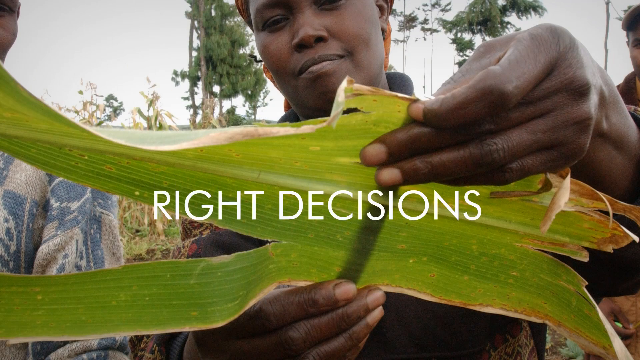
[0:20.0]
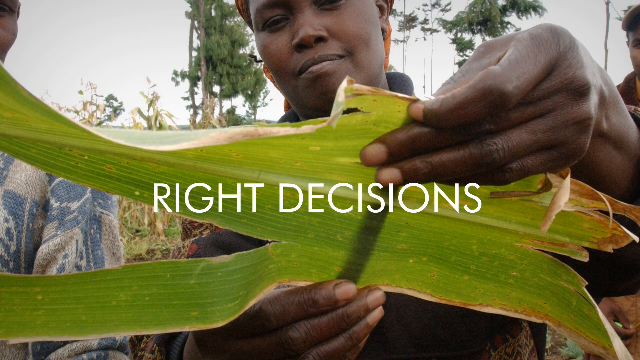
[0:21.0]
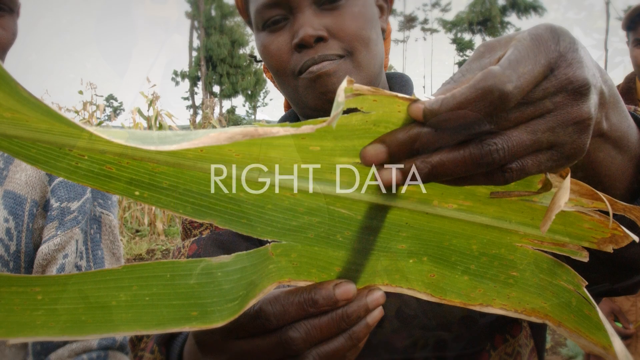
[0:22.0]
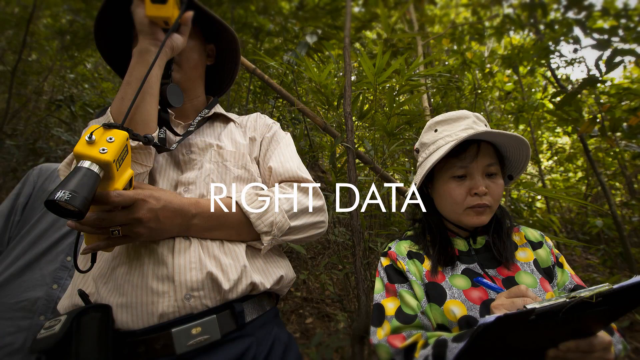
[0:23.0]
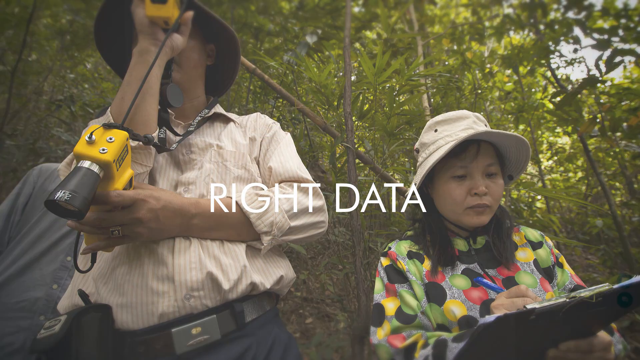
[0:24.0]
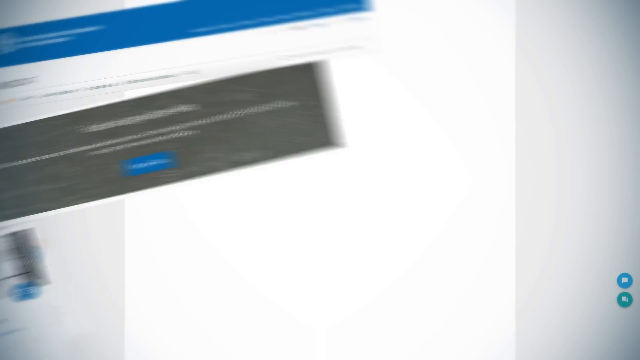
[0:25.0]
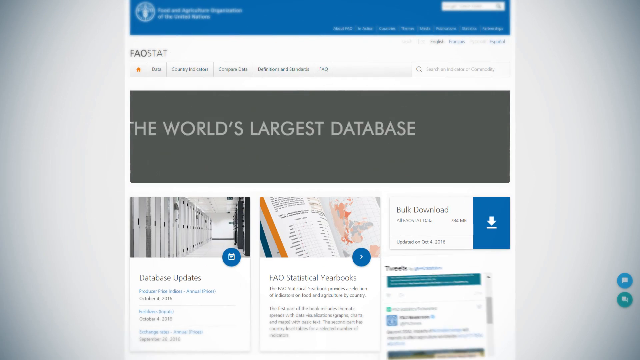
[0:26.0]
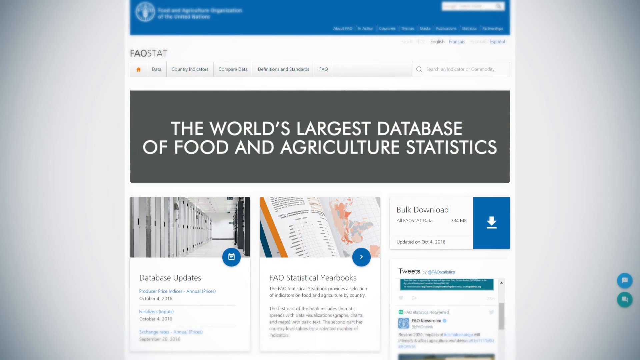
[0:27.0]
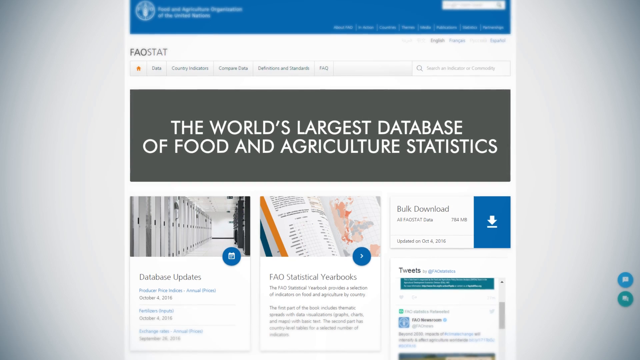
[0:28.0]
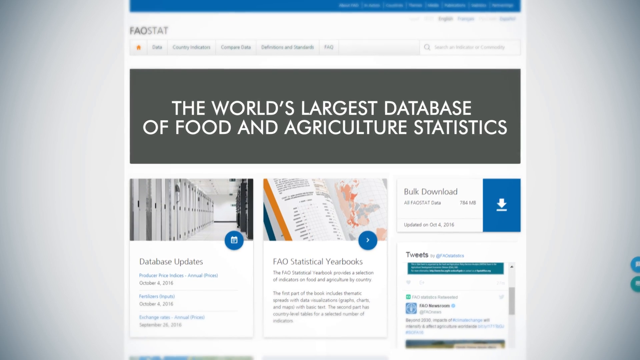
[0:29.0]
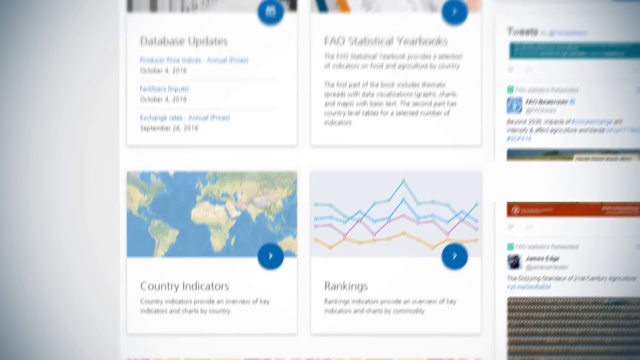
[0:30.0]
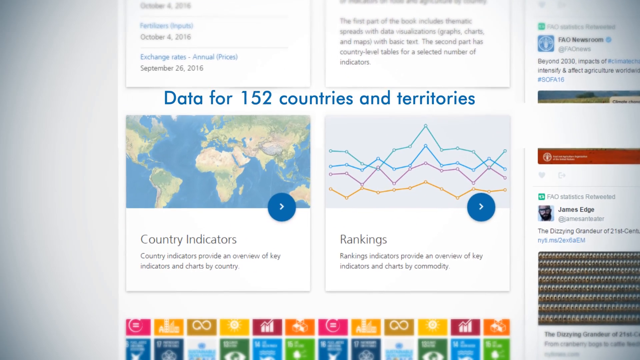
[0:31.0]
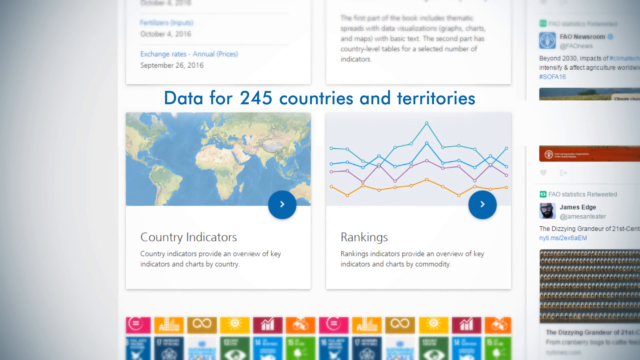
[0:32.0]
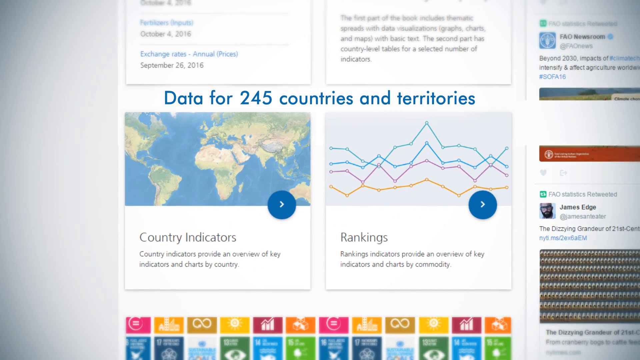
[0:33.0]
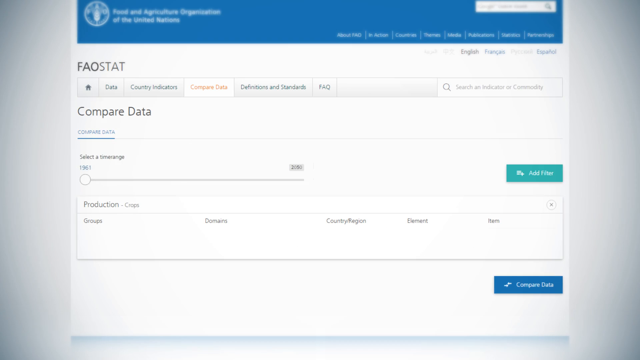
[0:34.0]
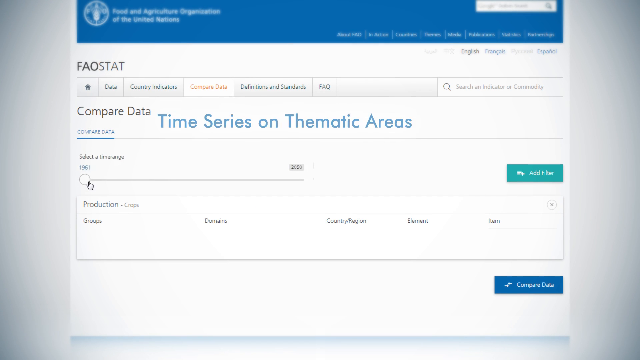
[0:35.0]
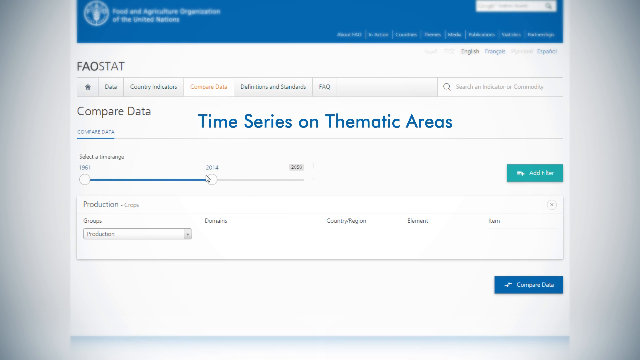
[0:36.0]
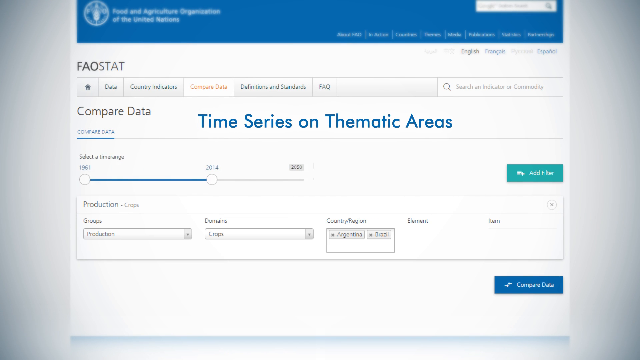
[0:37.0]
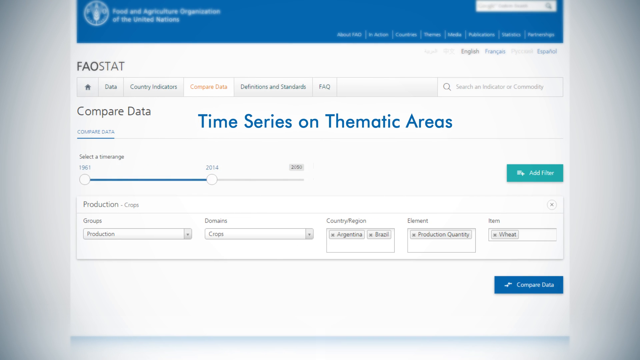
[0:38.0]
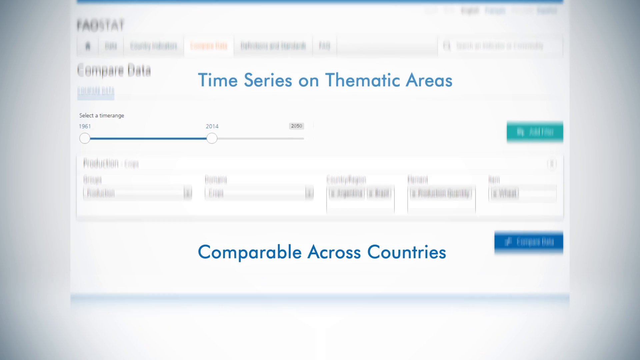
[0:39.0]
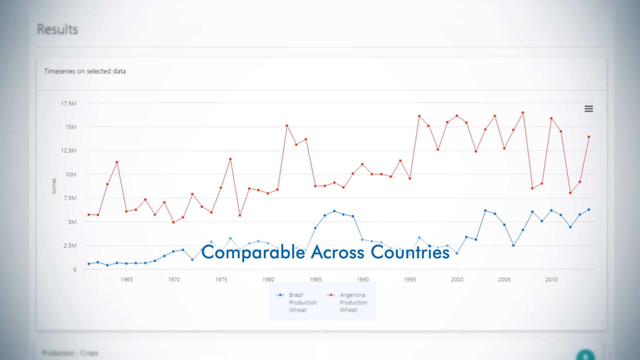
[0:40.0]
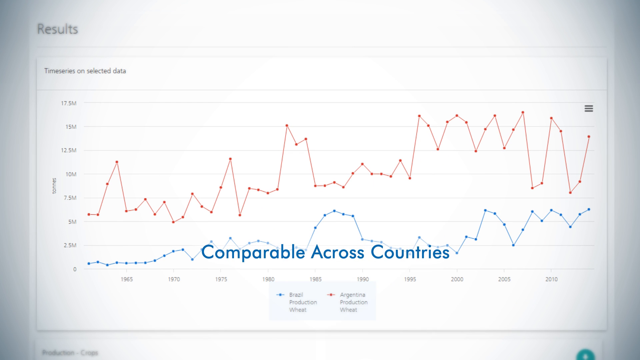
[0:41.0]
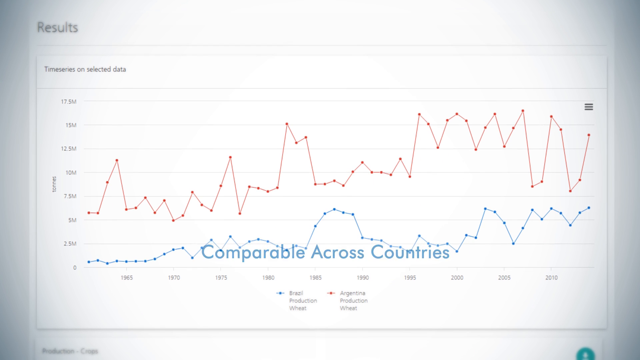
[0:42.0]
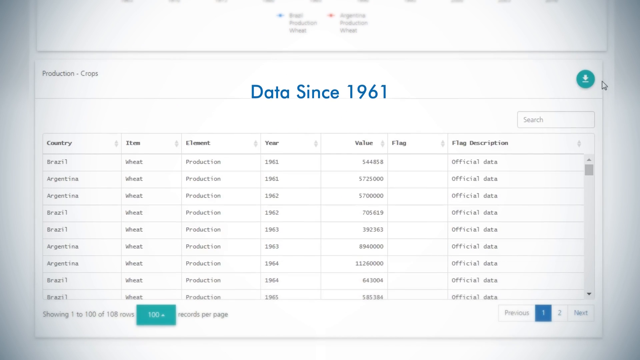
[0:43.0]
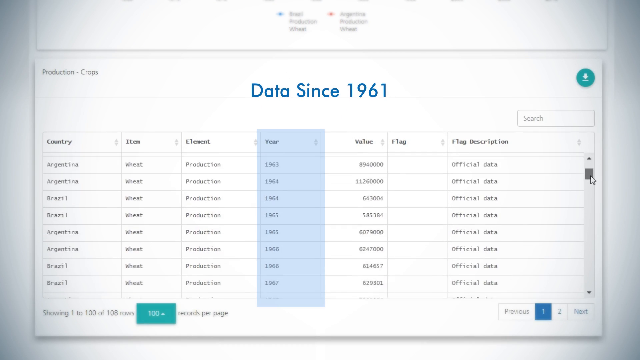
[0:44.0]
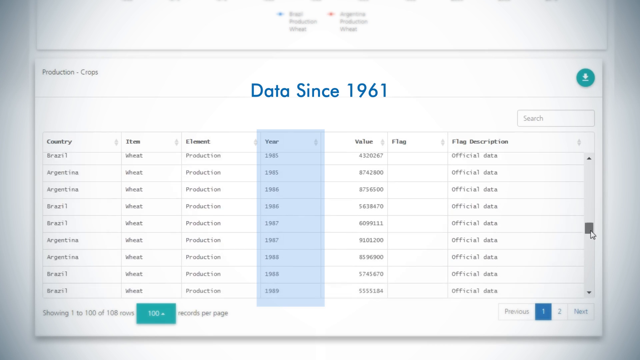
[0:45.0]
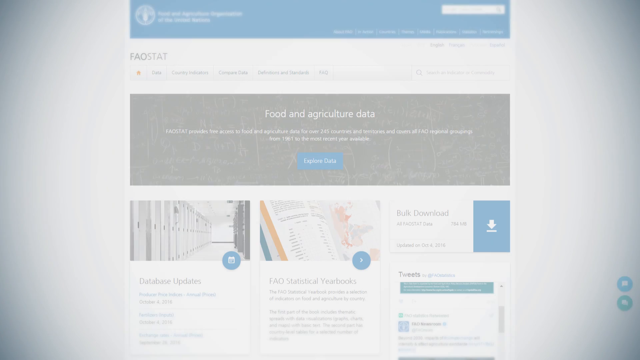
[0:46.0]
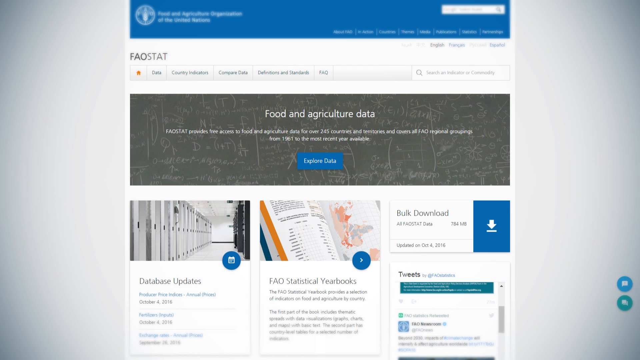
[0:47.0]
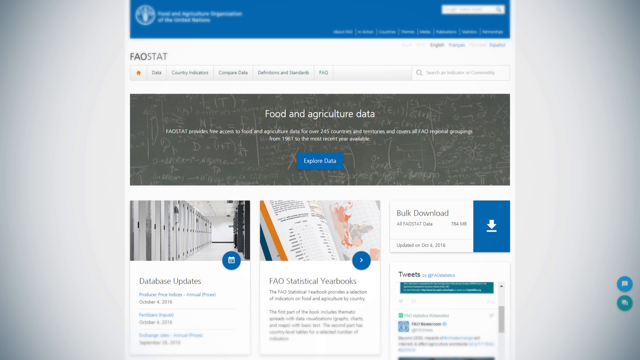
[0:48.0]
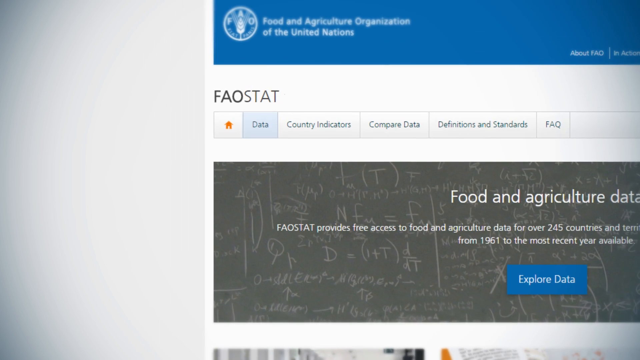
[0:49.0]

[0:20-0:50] Text reads "Right decisions. Right data," followed by "the world's largest database of food and agriculture," "data for 245 countries," "time series on thematic areas," "comparable across countries" and "data since 1961." Food and agriculture data and a fact sheet are shown. An African woman with a leaf appears. The video then shows the database with data for all the countries, the time stamps and the backup data since 1961. There are workers helping out.